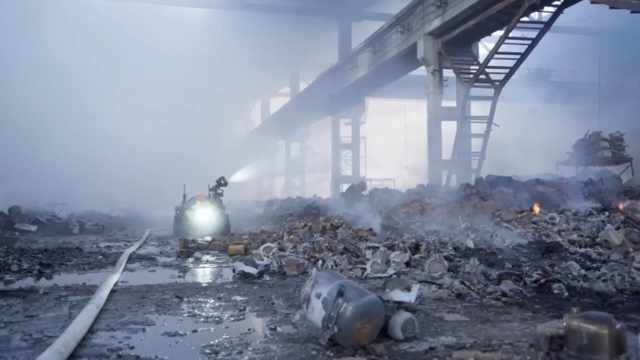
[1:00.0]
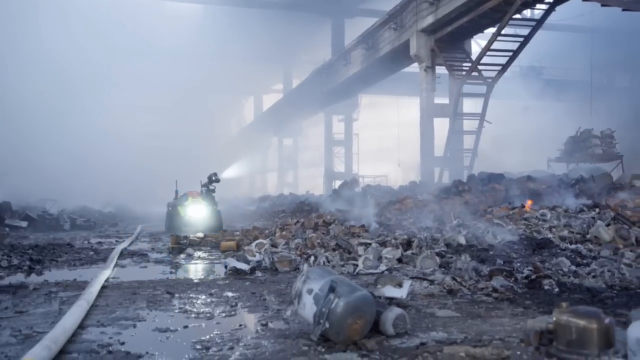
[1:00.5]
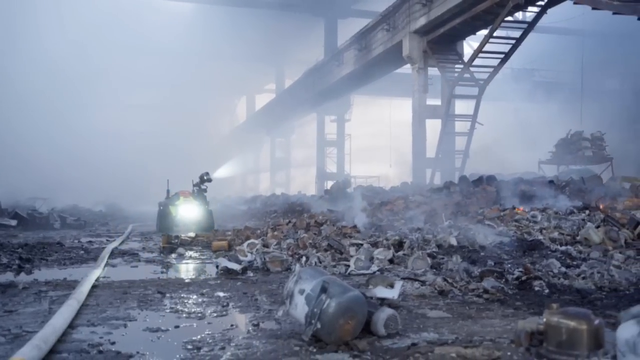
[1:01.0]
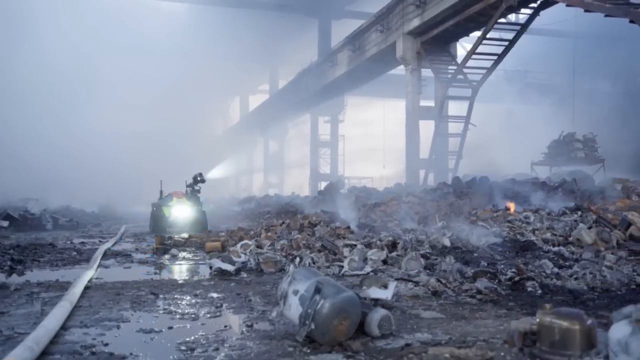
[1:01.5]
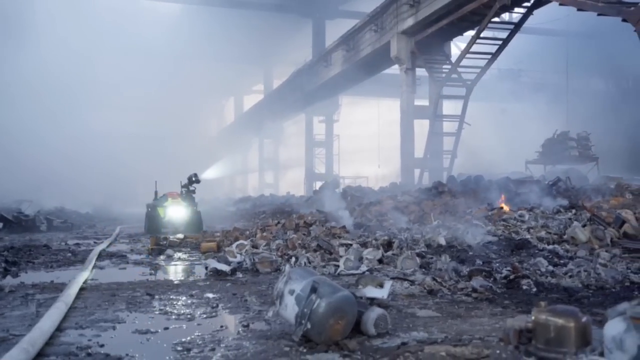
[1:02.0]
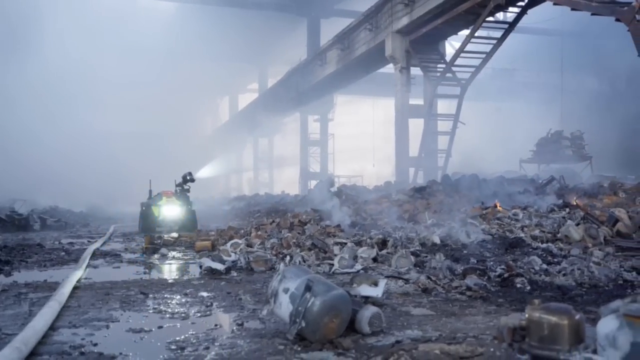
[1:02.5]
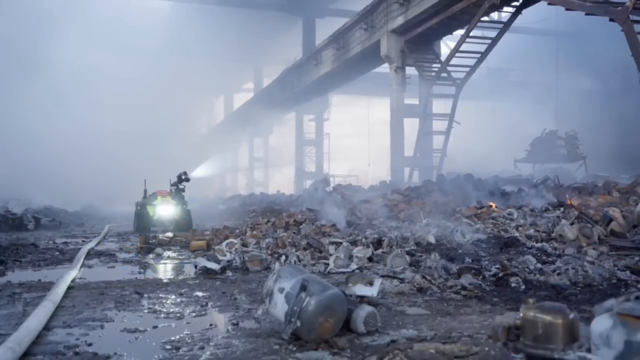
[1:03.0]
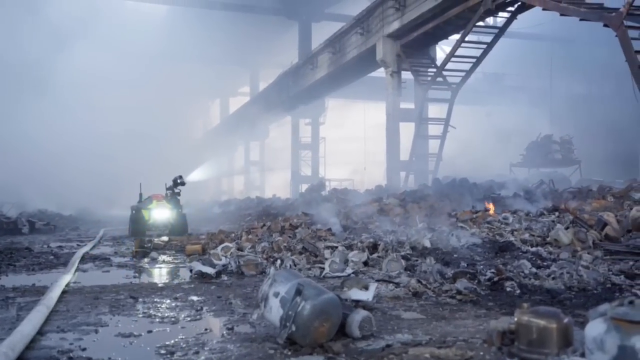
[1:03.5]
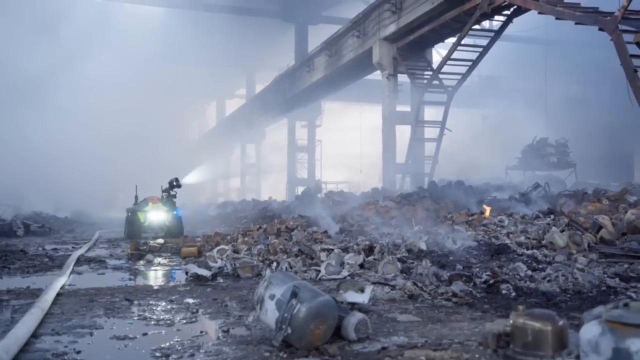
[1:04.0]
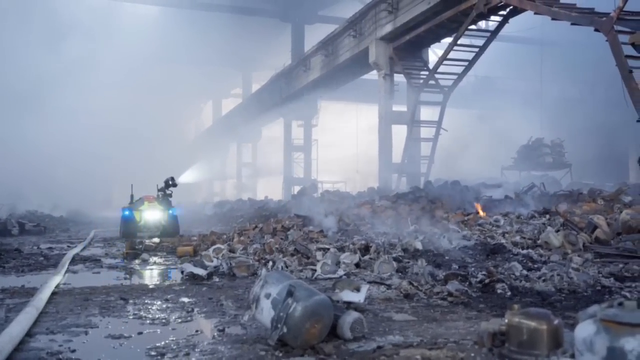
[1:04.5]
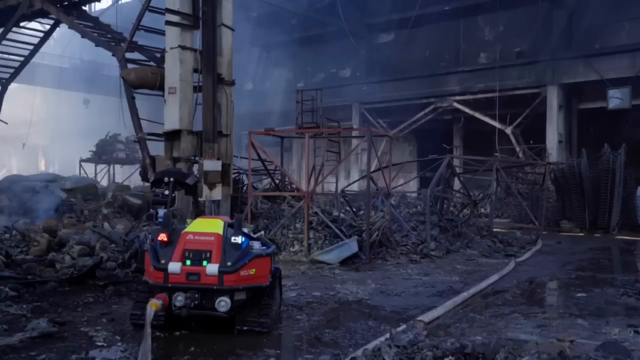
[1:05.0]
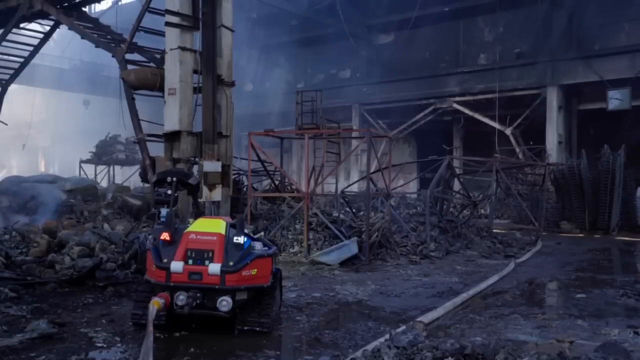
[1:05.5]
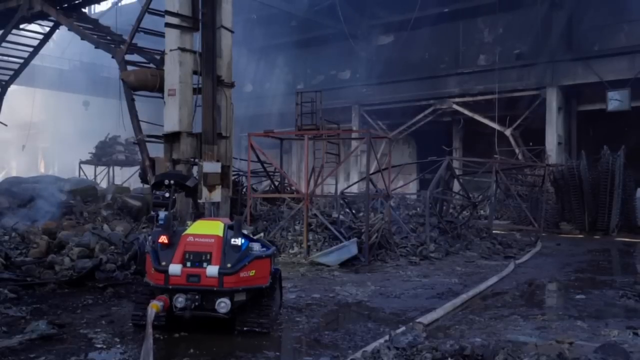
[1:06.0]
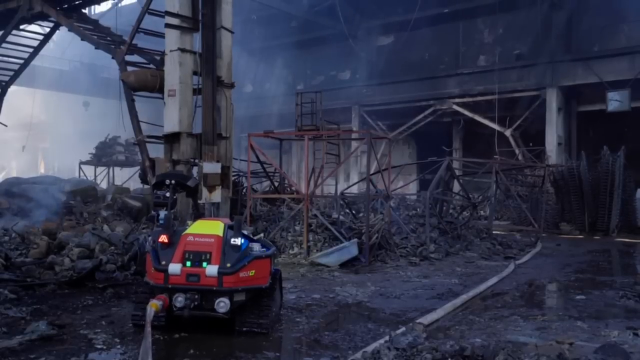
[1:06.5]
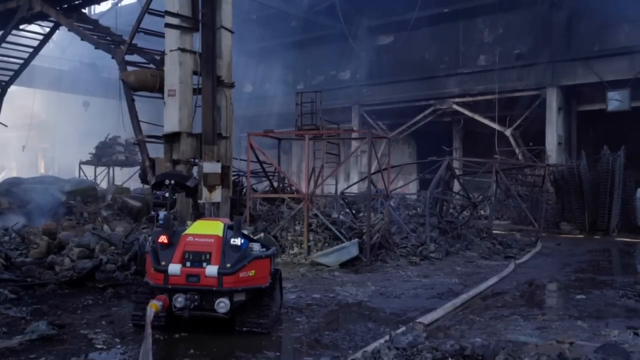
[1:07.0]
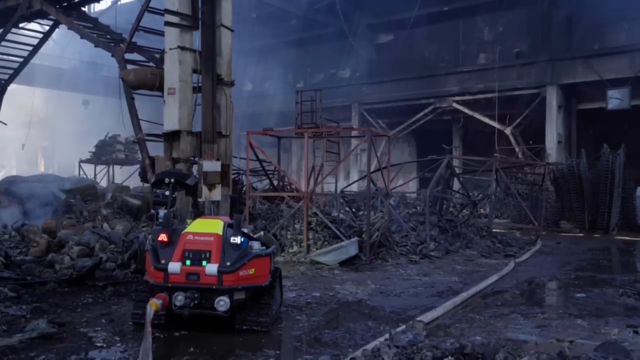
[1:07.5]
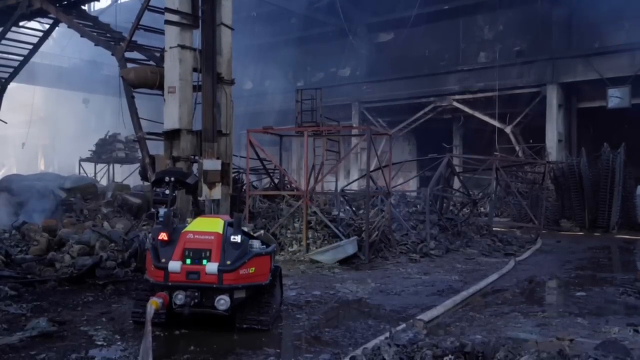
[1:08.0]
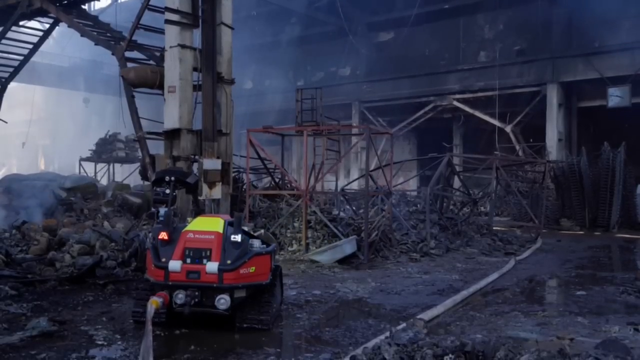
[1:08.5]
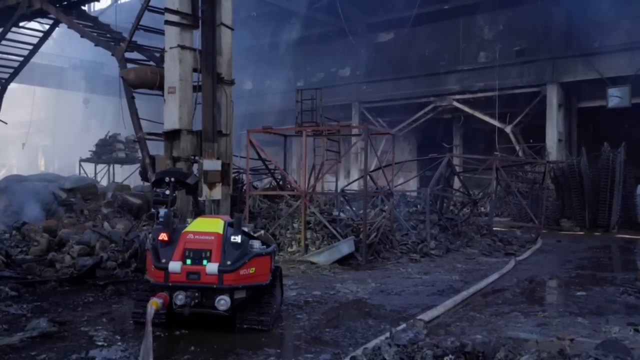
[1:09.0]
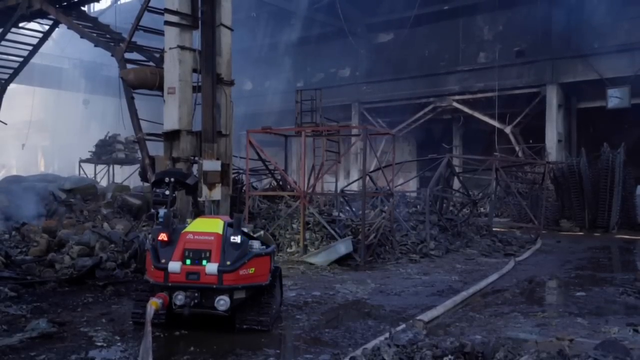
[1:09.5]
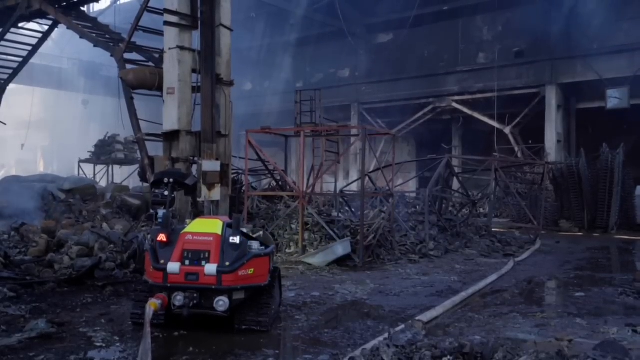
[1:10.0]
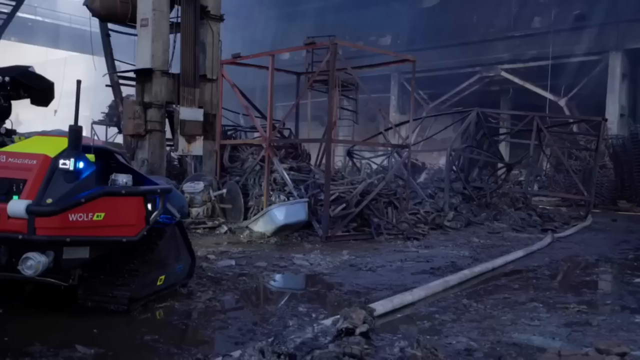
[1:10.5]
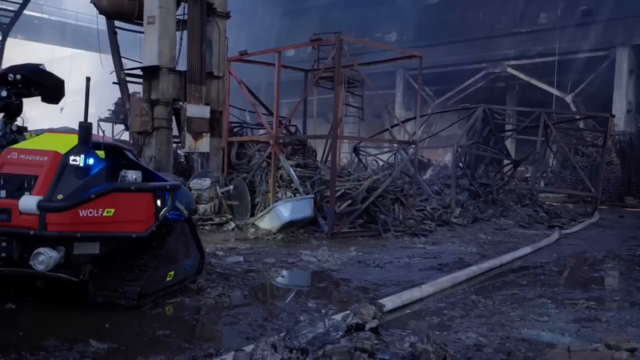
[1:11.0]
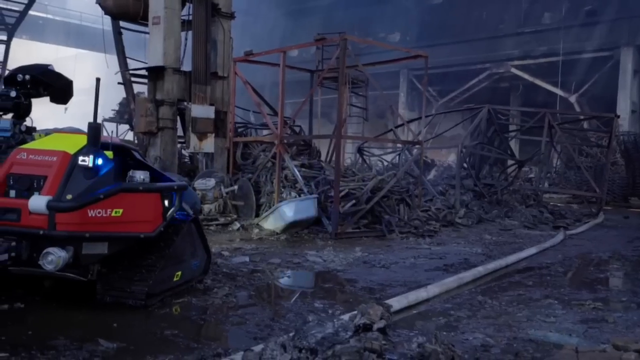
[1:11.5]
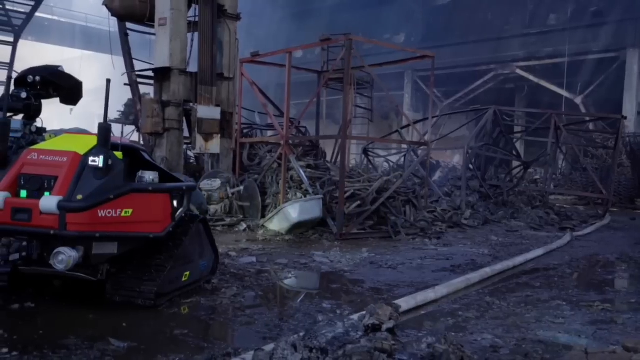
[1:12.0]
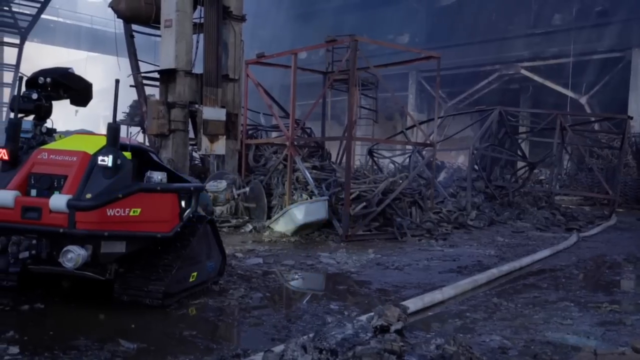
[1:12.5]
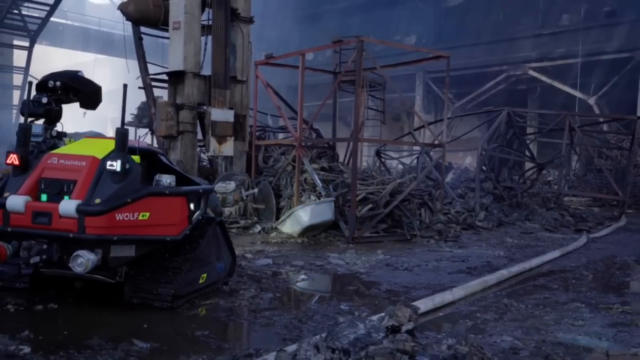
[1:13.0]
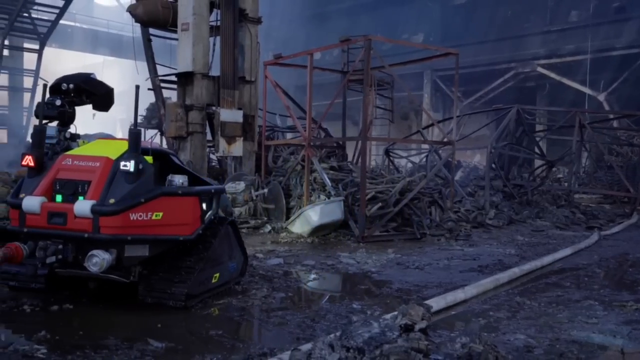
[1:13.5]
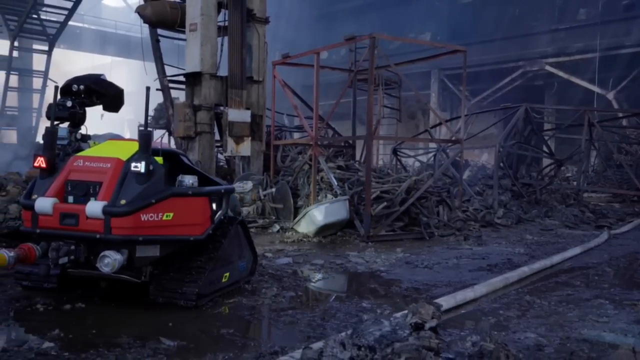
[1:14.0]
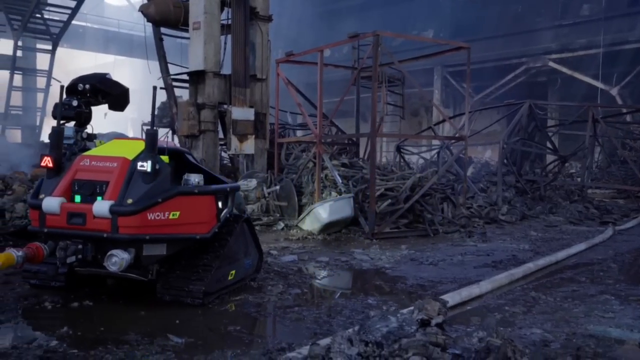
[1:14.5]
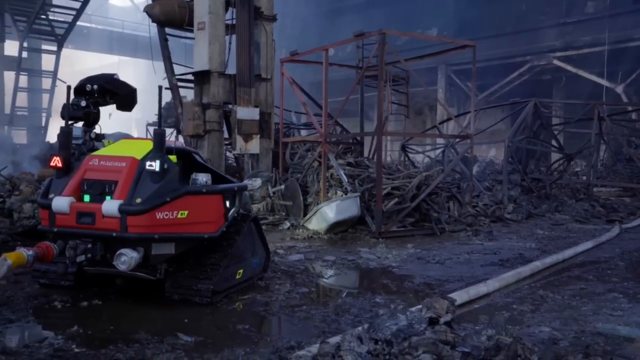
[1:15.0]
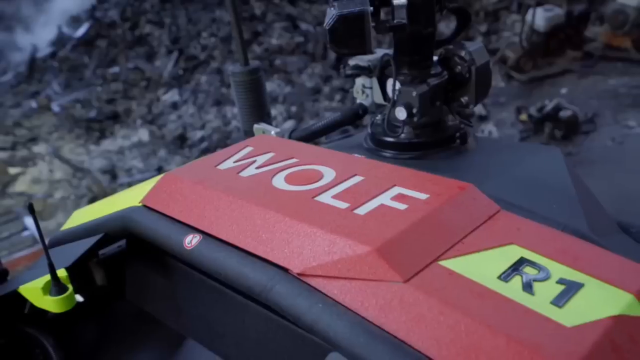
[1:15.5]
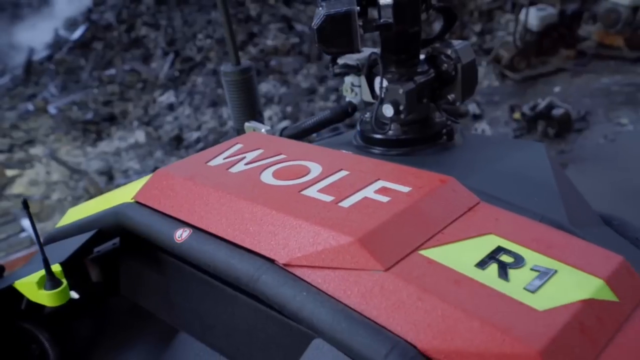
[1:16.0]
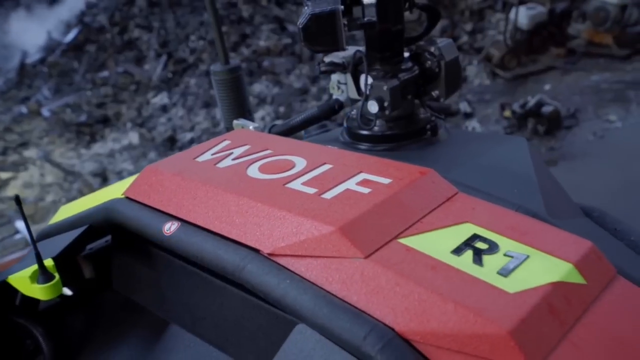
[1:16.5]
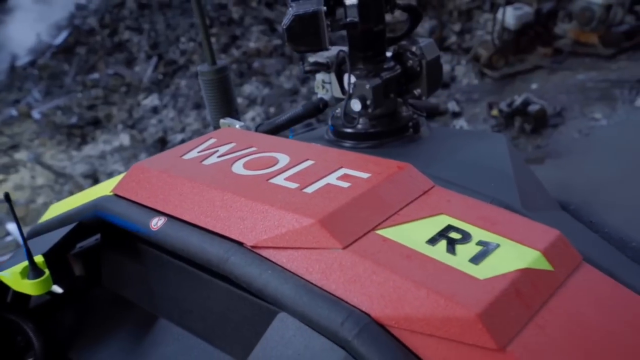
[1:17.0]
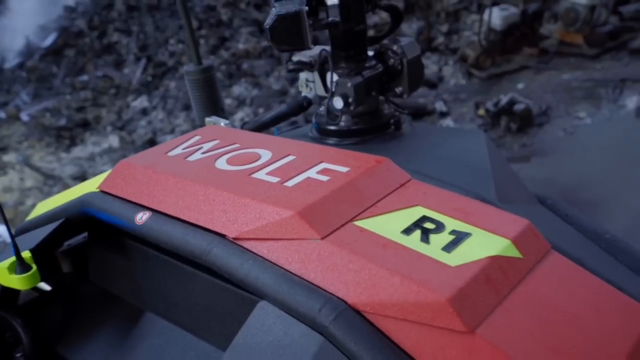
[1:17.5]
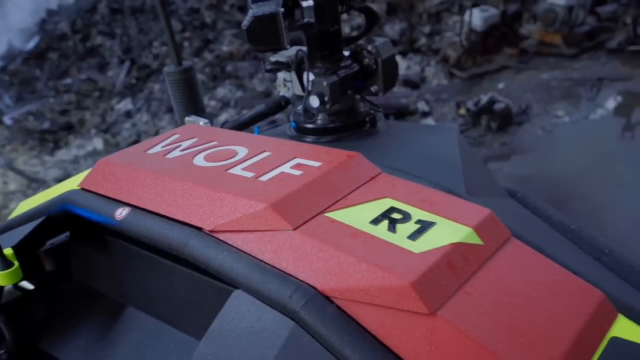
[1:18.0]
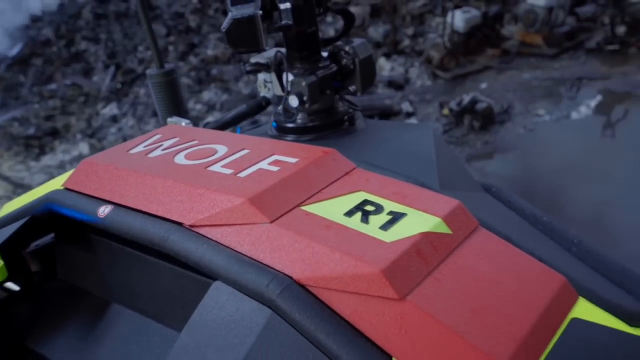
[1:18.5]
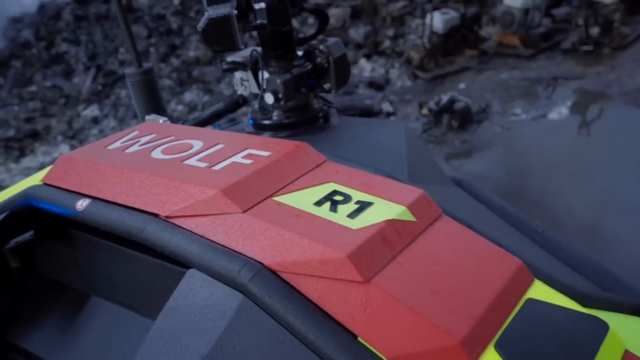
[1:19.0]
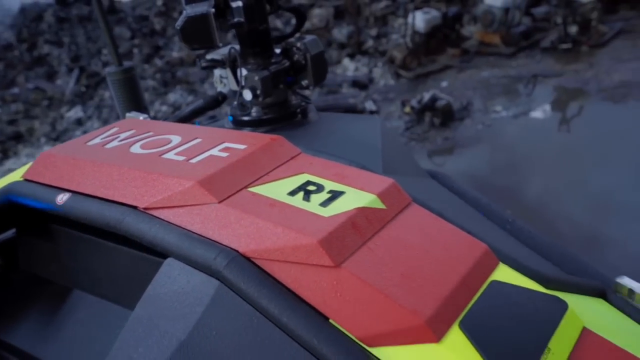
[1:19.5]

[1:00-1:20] A long hose lies on the floor, and the tiny vehicle, branded "WOLF", is standing there flashing its blue light, with what looks like two antennas at the back vibrating. A tiny bit of fire is still burning somewhere. The building looks like a bridge in front of the camera but also seems to be part of a bigger structure, possibly a factory, with an area that could be a shopping area or a car park. Because of the cloudiness, it is hard to see exactly what or where the building is.